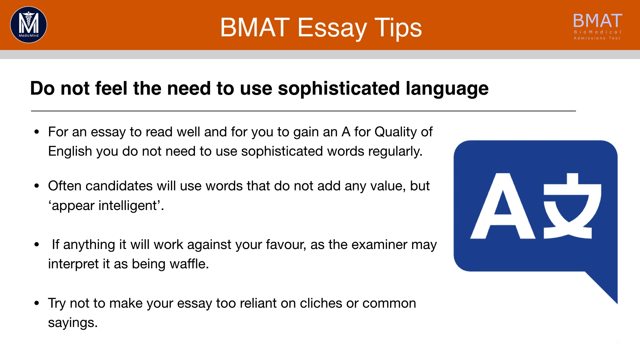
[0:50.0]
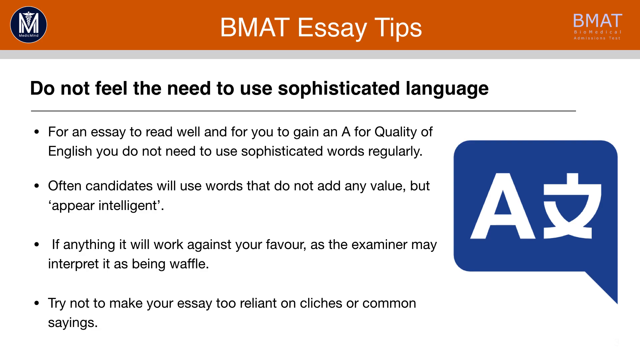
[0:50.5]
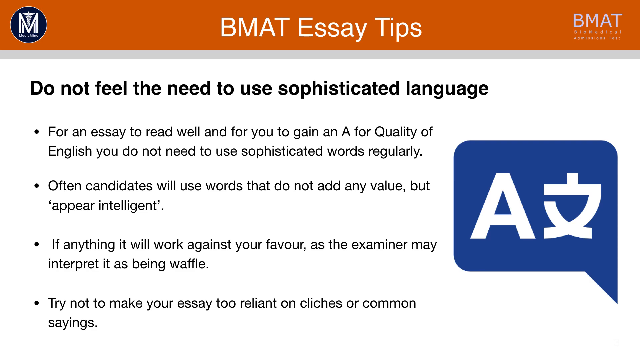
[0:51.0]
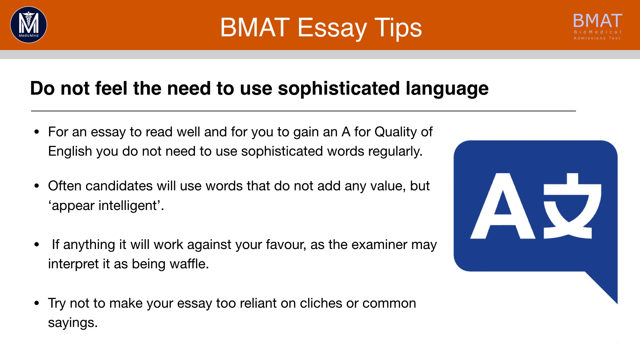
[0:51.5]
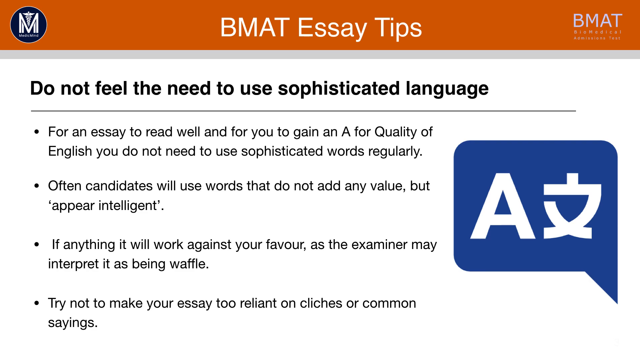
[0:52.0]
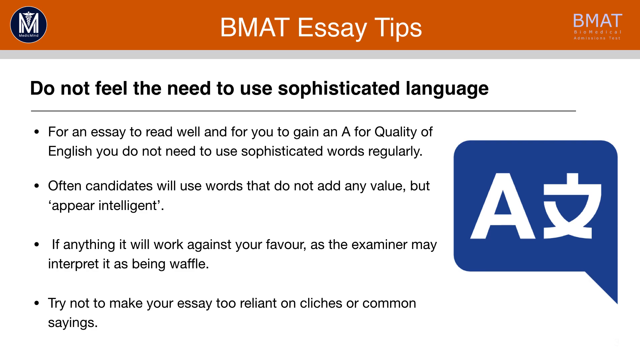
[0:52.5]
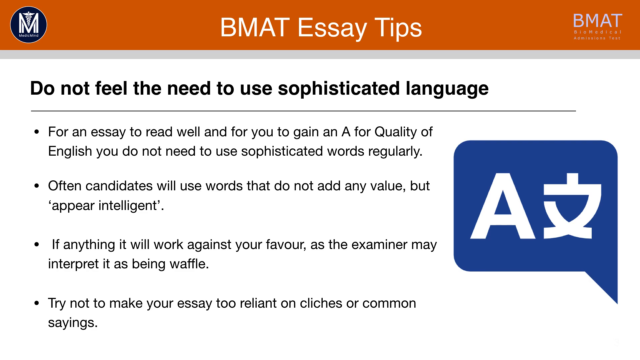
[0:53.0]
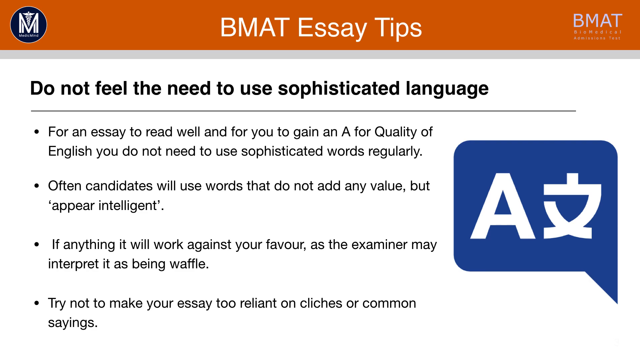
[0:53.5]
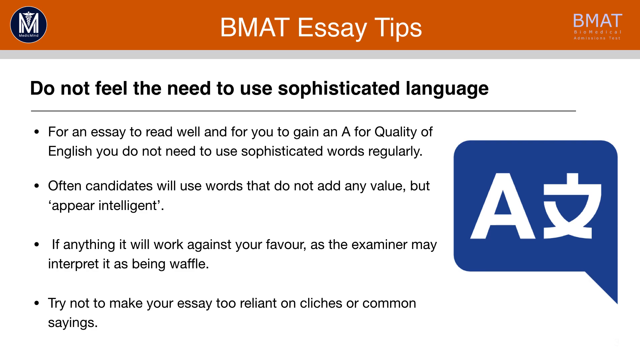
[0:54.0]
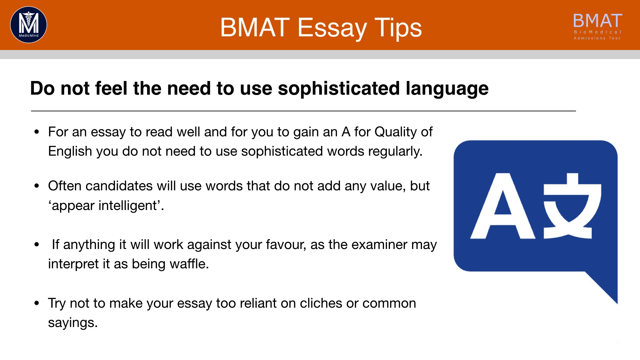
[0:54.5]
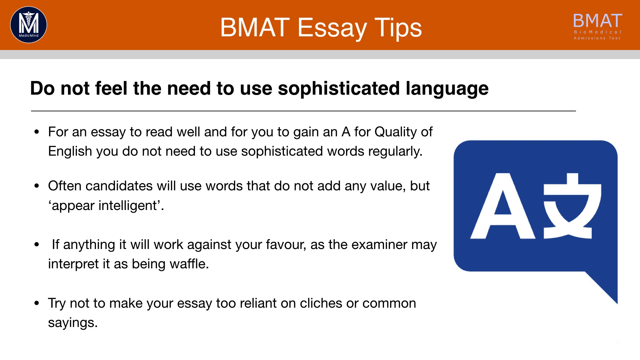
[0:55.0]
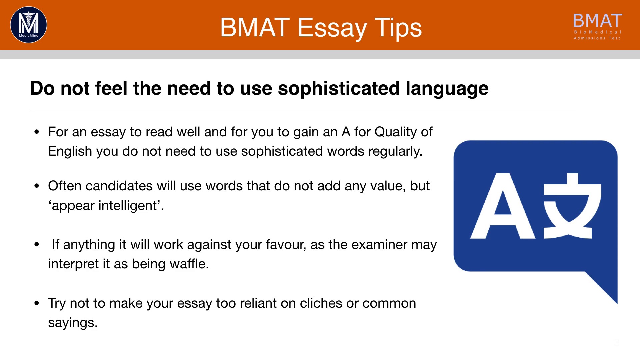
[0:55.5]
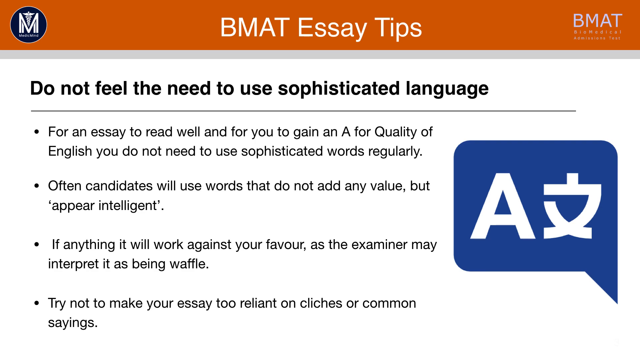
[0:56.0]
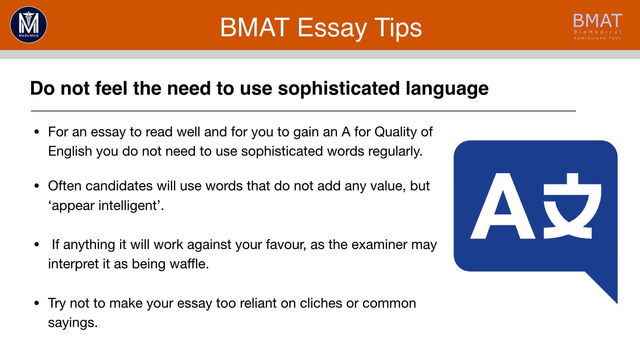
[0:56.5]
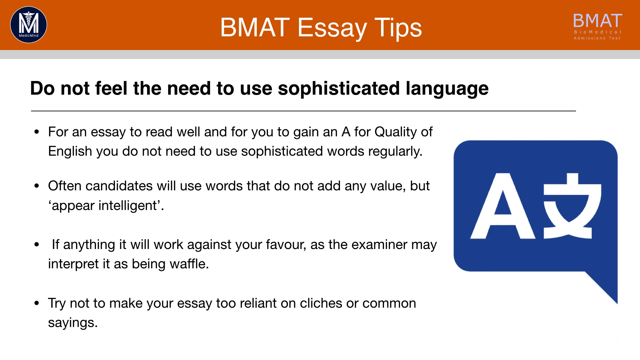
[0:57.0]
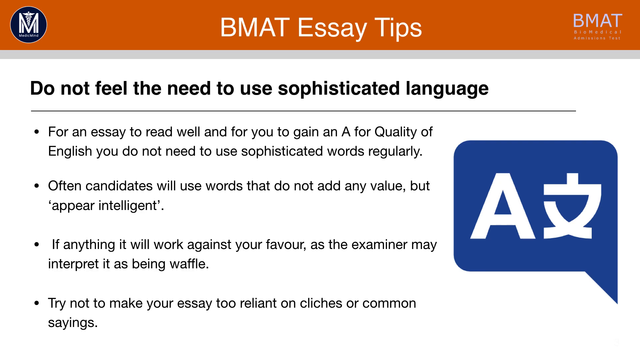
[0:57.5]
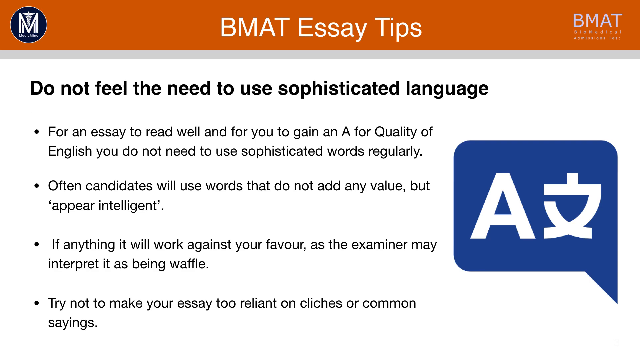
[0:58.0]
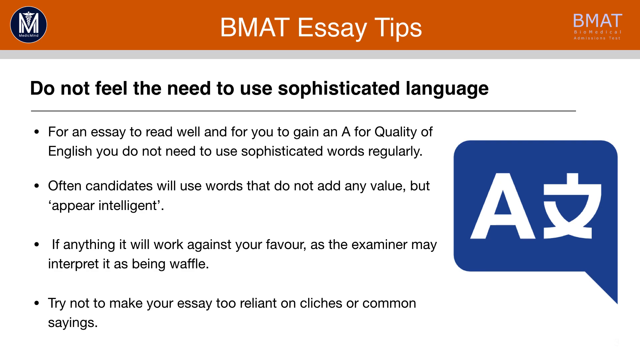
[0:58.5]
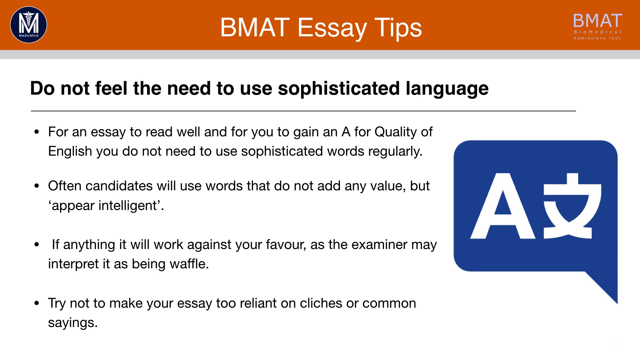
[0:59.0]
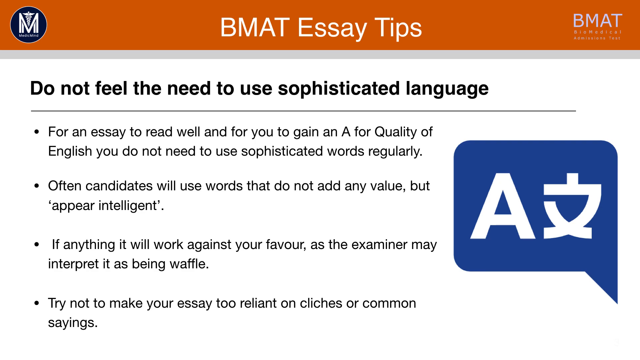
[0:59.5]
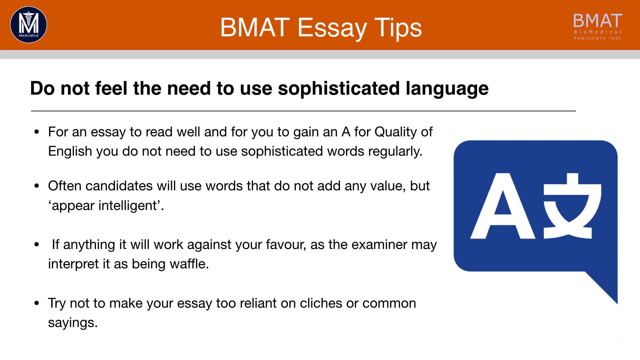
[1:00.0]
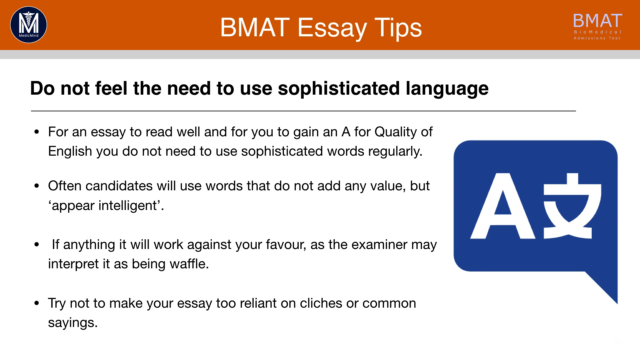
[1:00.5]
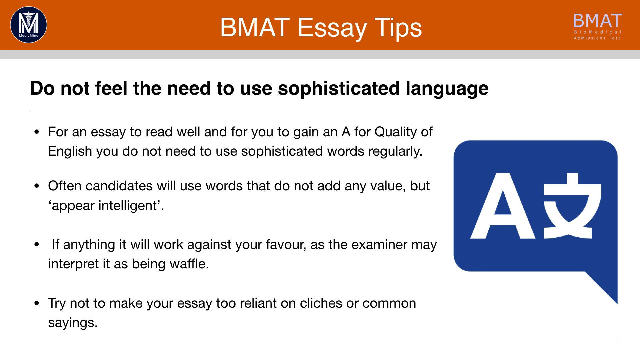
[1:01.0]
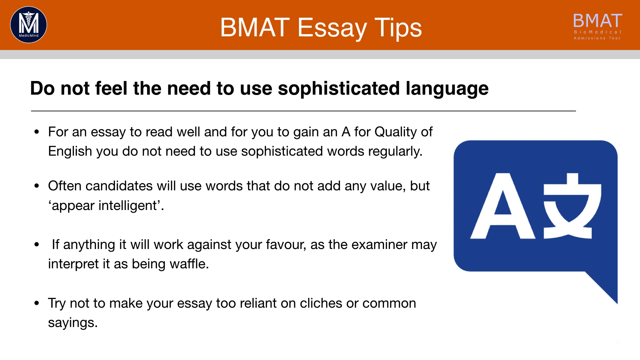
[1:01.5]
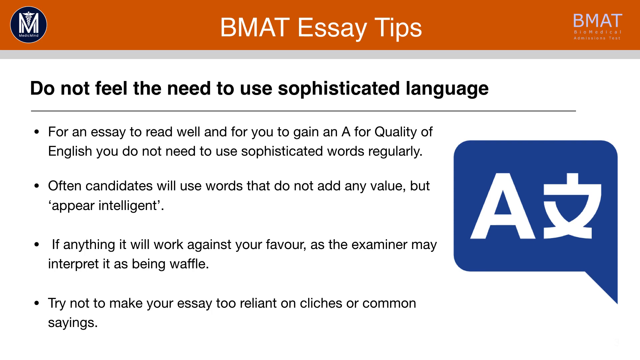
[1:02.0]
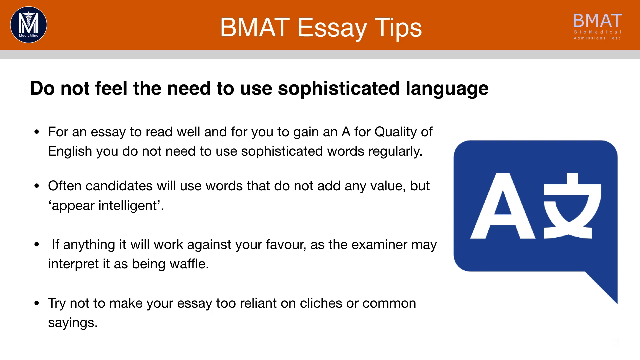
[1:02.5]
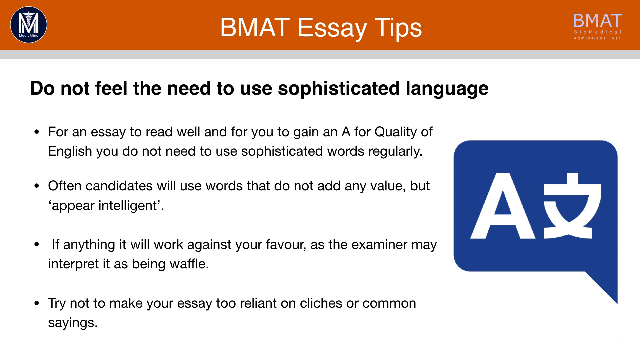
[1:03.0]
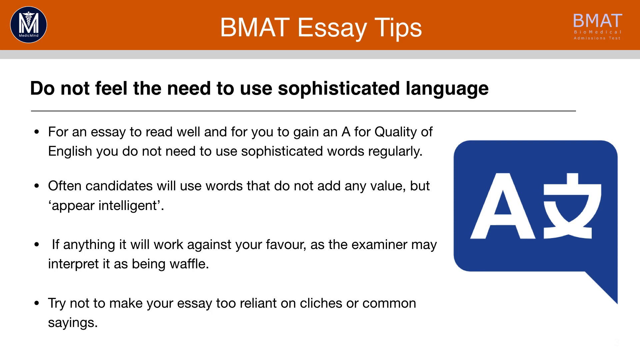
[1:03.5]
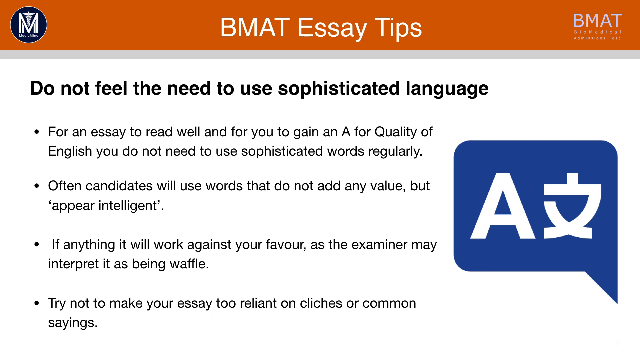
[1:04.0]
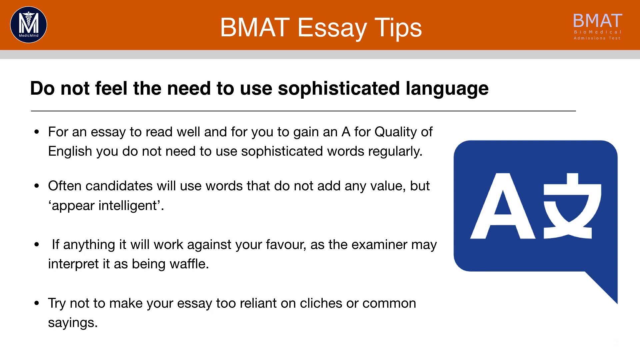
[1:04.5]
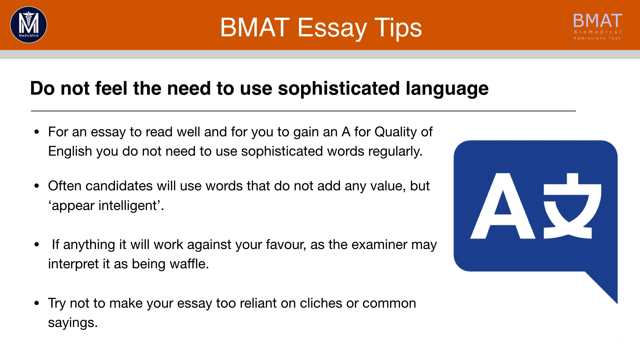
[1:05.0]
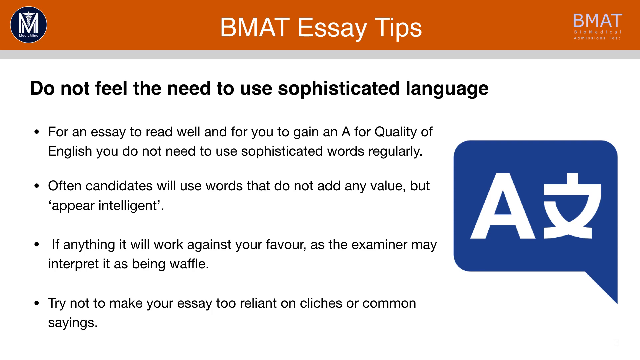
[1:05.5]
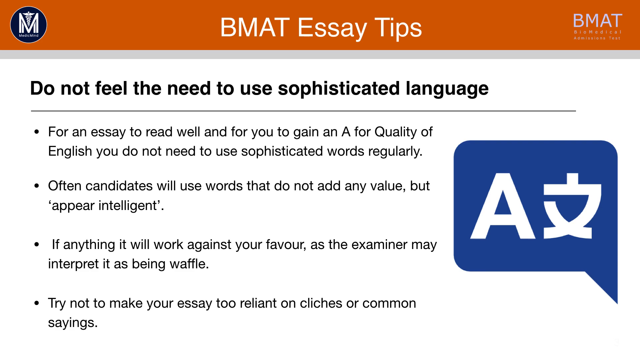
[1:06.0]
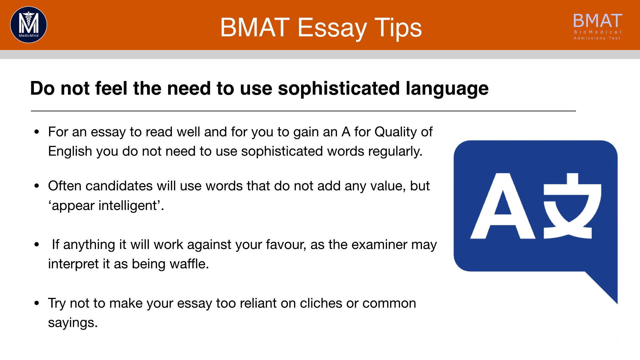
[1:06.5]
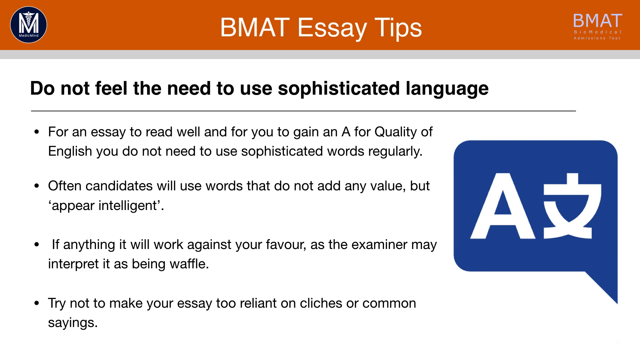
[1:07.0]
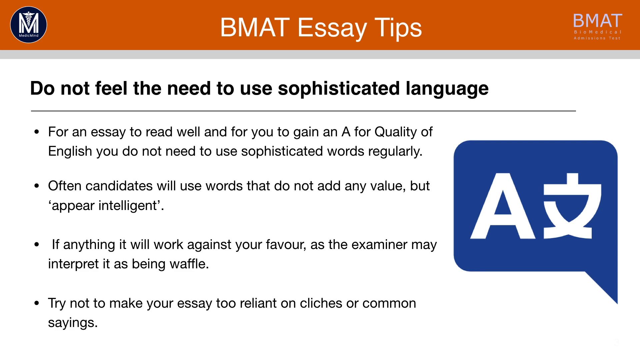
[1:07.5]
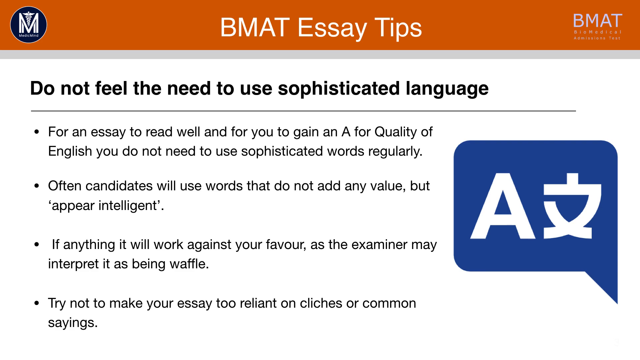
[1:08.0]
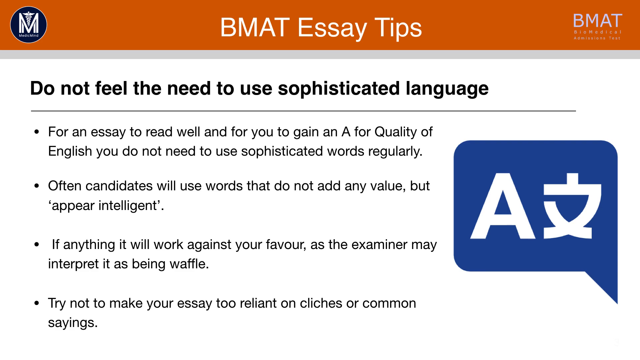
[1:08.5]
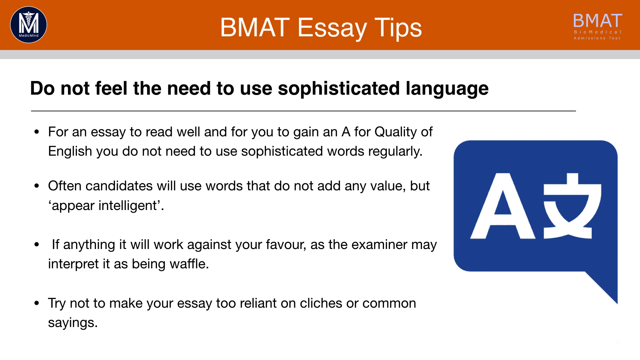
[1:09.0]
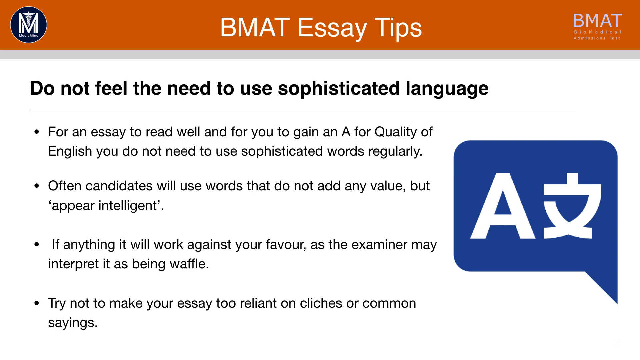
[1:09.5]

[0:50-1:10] The presentation screen still shows the orange text overlay at the top, the white and blue logo with a large white M at the top left, and another logo reading "BMAT" at the top right. Below, black text reads "do not feel the need to use sophisticated language". Underneath are four separate bullet points, each containing different information about sophisticated language; they vary in size but appear to each be at least a sentence long. On the right side of the screen is a new logo, a box-like shape with a large A and another character, both in white. The elements take up a small portion of the screen, and the rest remains white, with not much showing besides the black text and the blue logo.